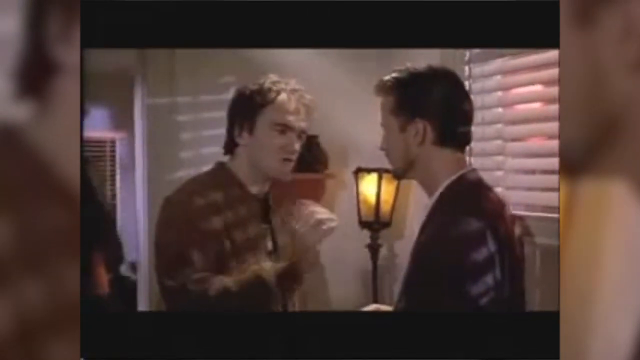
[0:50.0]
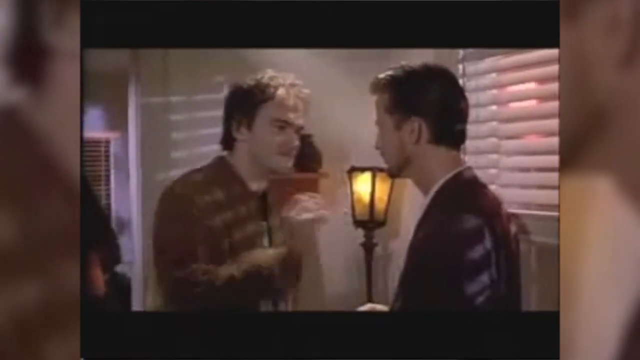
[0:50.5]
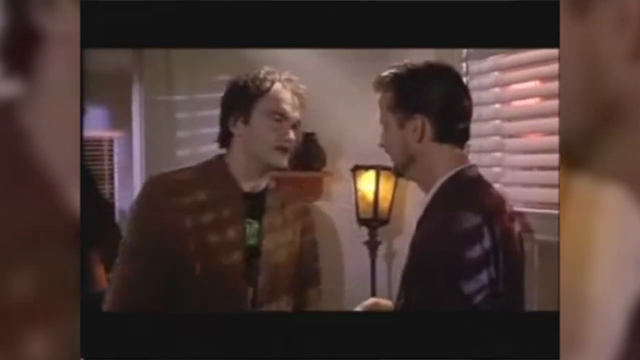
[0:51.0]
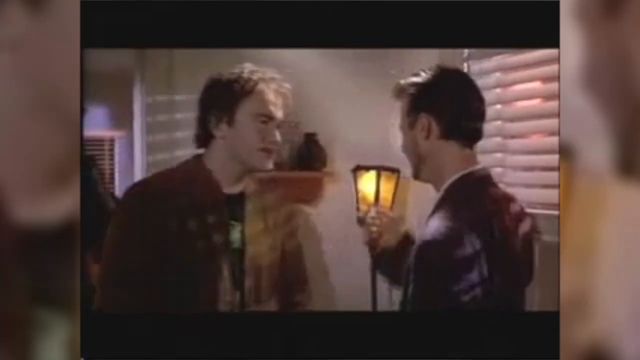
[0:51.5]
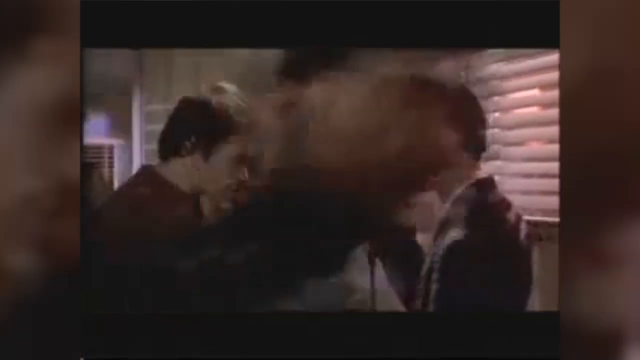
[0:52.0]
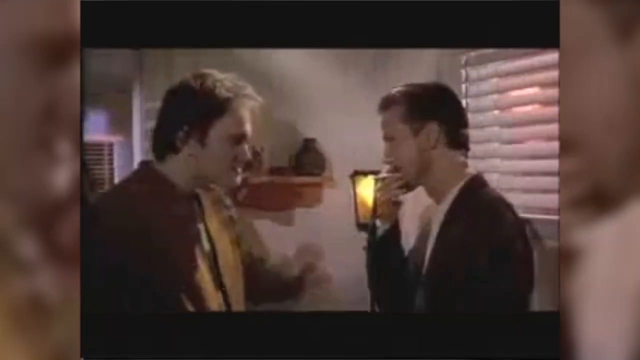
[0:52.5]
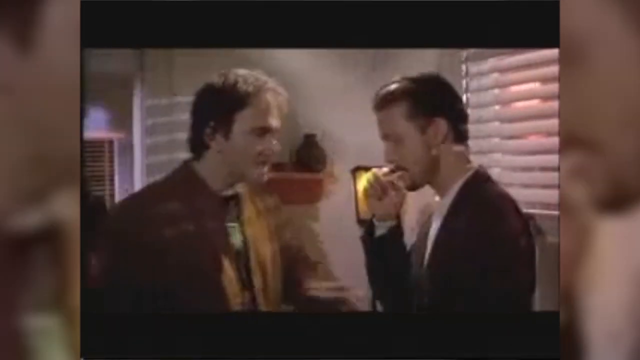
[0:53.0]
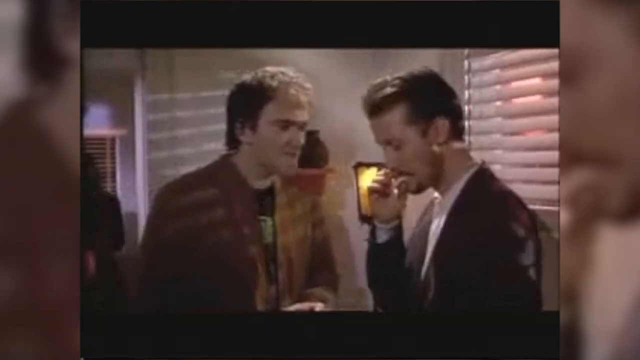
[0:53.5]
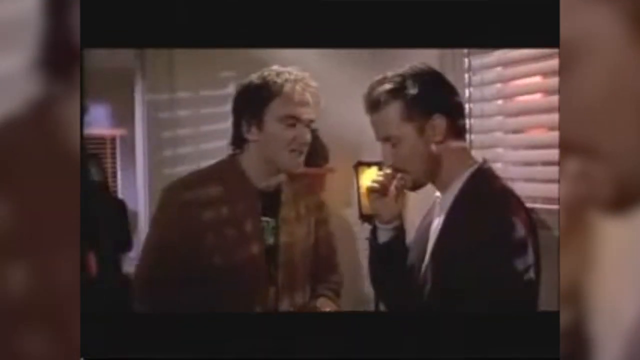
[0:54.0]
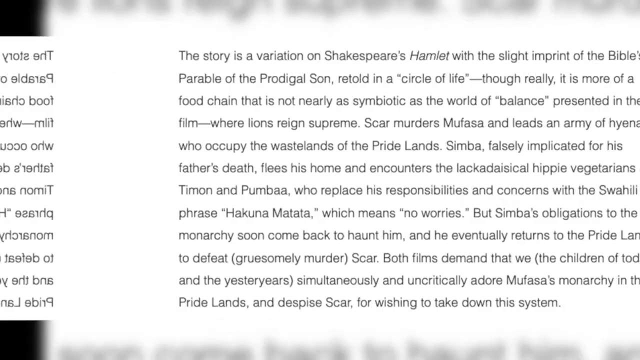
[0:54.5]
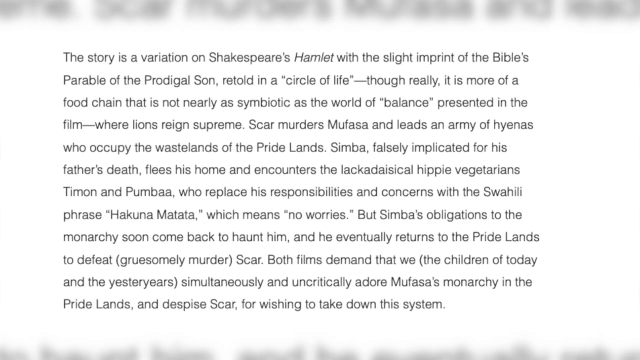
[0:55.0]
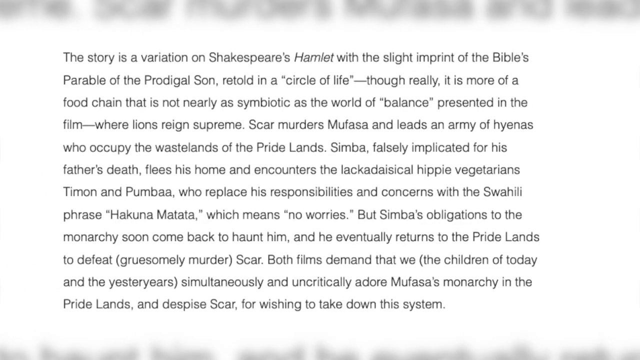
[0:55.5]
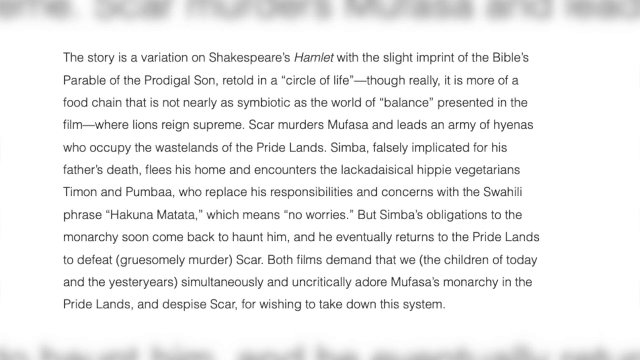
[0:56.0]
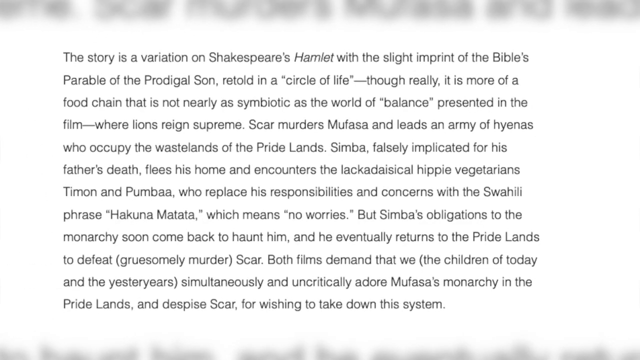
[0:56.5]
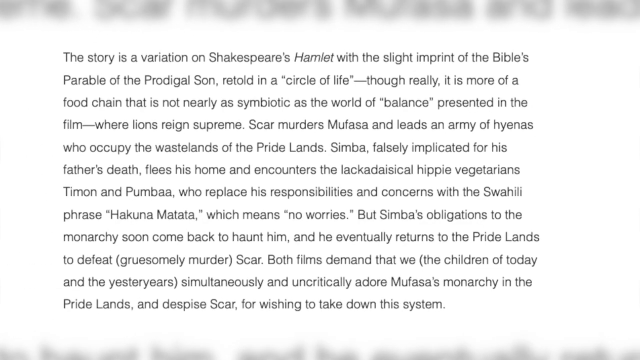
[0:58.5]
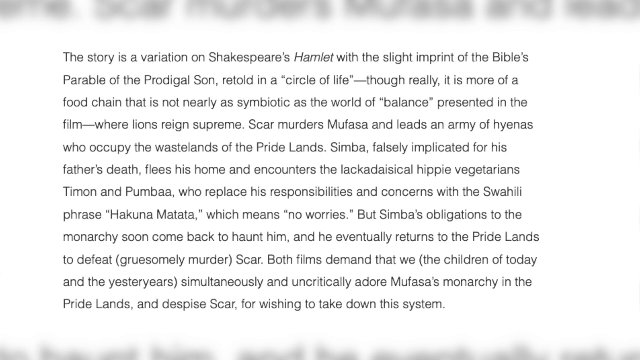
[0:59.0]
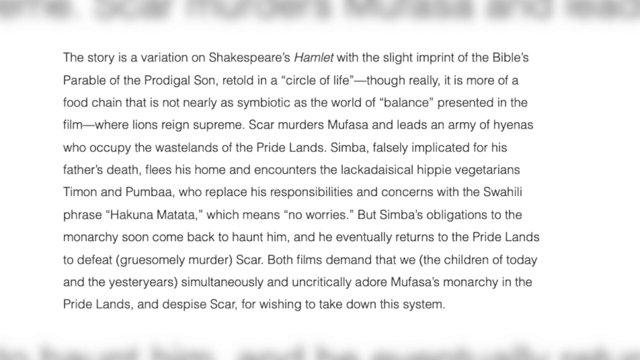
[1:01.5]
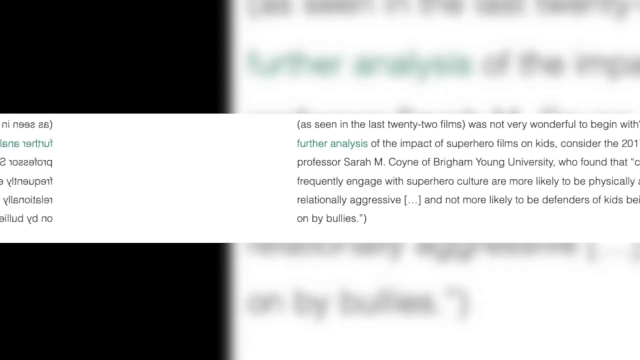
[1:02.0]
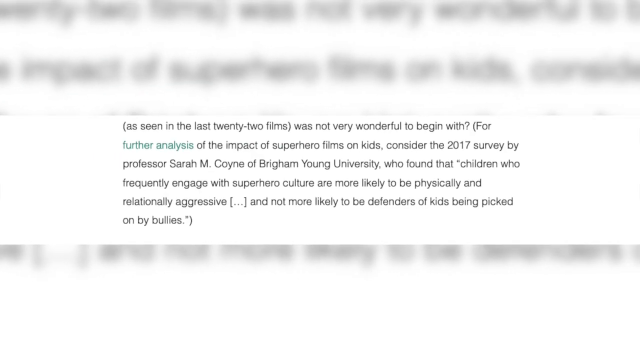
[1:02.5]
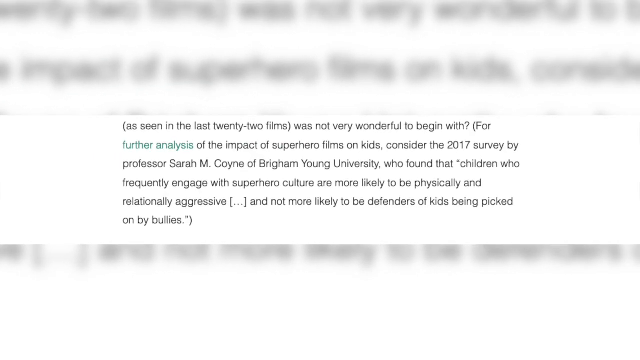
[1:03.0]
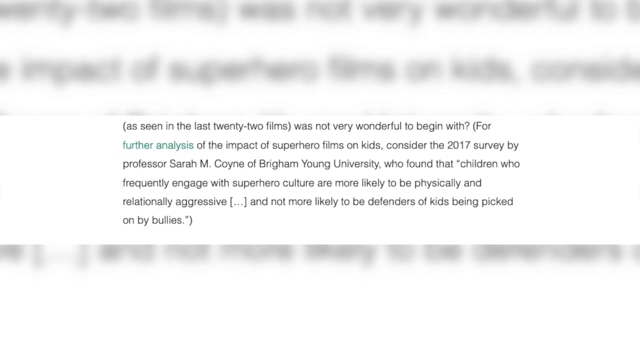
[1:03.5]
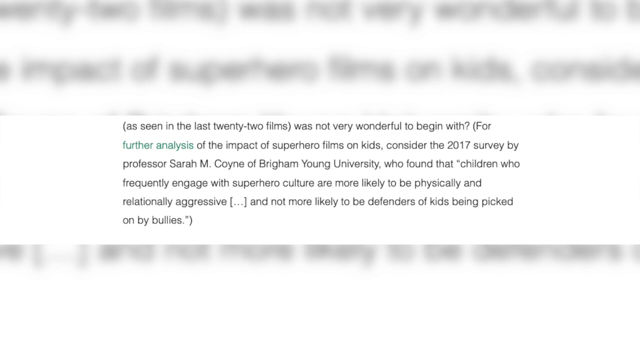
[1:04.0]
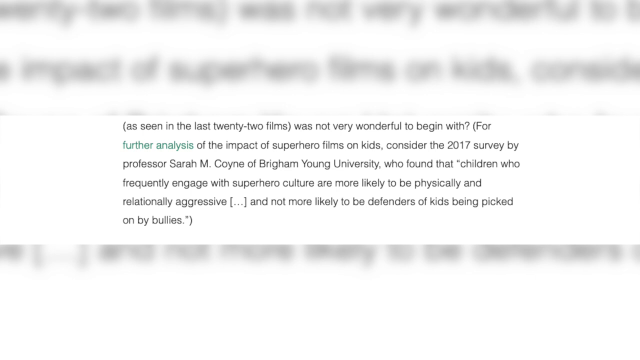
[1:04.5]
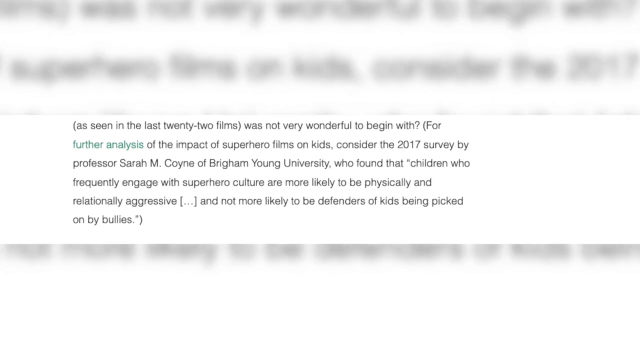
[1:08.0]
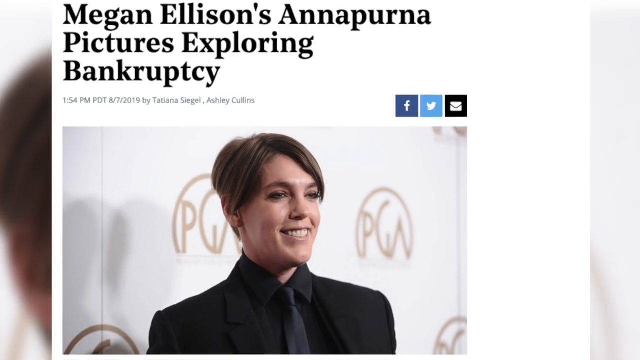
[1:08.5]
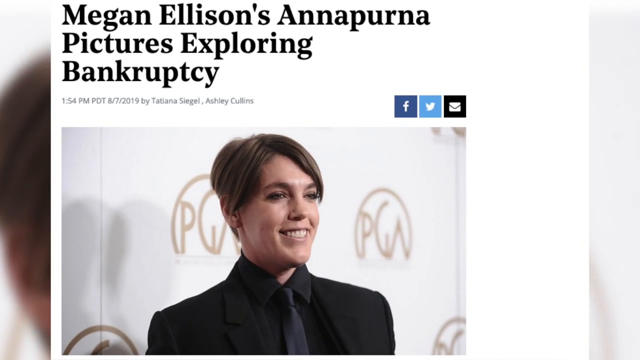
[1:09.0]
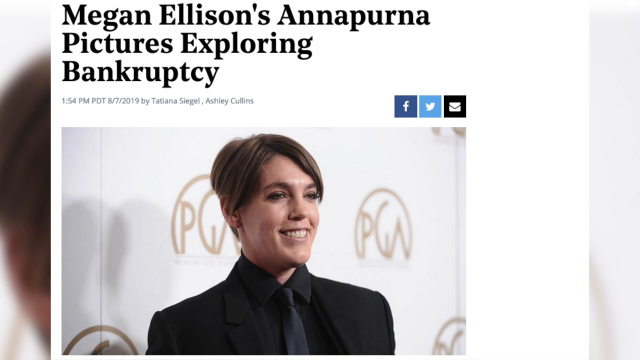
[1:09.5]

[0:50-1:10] Two men have a conversation in a room, with a lit lamp and a window blind in the background. Both wear jackets: one jacket is dark brown, while the other man wears a black jacket with a white t-shirt underneath. The man in the black jacket is smoking, and the man in the dark brown jacket seems agitated as he gesticulates while speaking to the other man. The man in the black jacket puts the cigarette in his mouth, takes a puff, and removes it. The video transitions to text on a white background stating "The story is a version of Shakespeare's Hamlet" and continuing with "Simba falsely implicated for his father's death, flees his home" and "But Simba's obligation to the monarchy soon comes back to haunt him, and he eventually returns to the Pride Lands." It also states that both films demand that we "simultaneously and uncritically adore Mufasa's monarchy in the Pride Lands and despise Scar for wishing to take down this system." Additional text is then added, with "Further analysis" written in green, followed by "of the impact of superhero films on kids" and "Consider the 2017 survey by Professor Sarah M. Coyney of Brigham Young University."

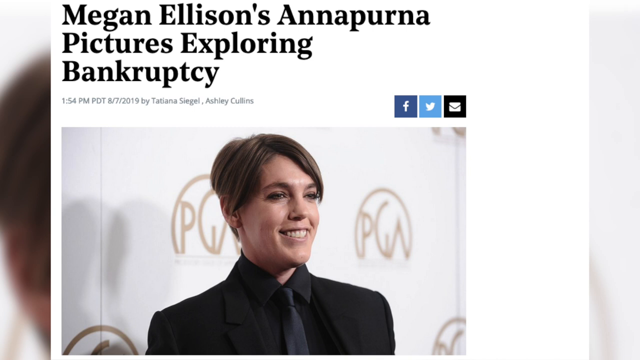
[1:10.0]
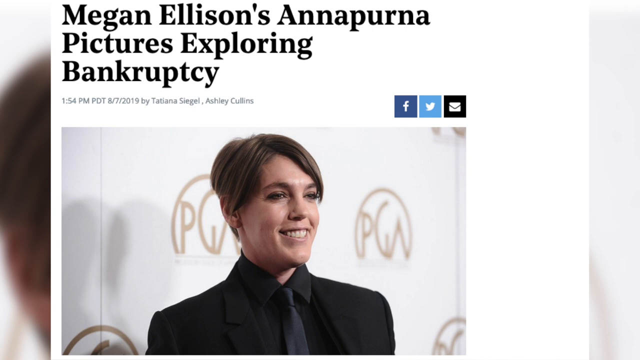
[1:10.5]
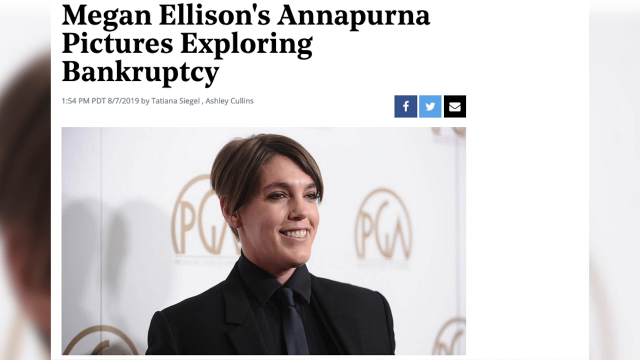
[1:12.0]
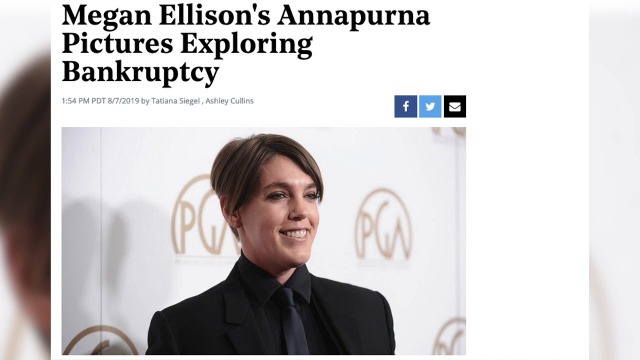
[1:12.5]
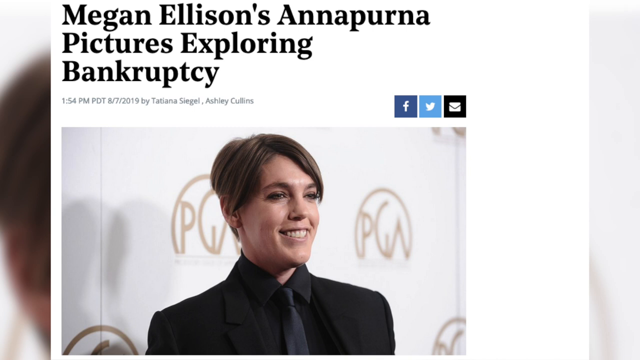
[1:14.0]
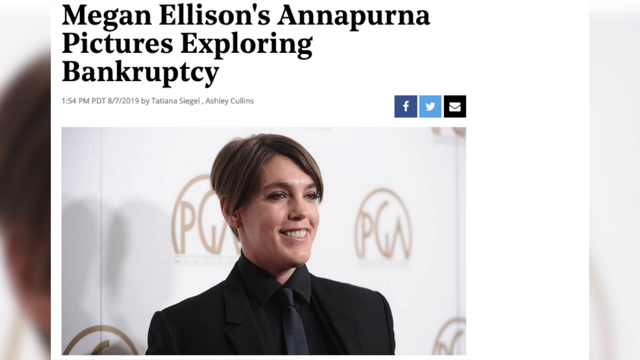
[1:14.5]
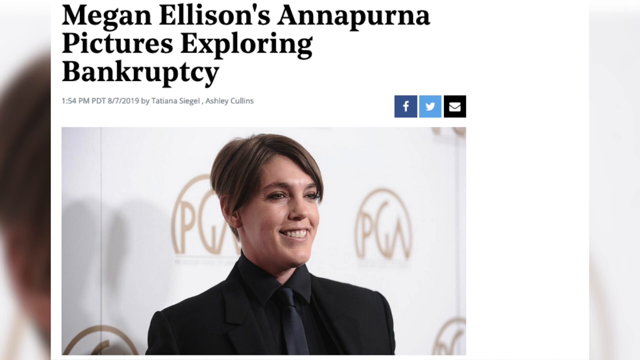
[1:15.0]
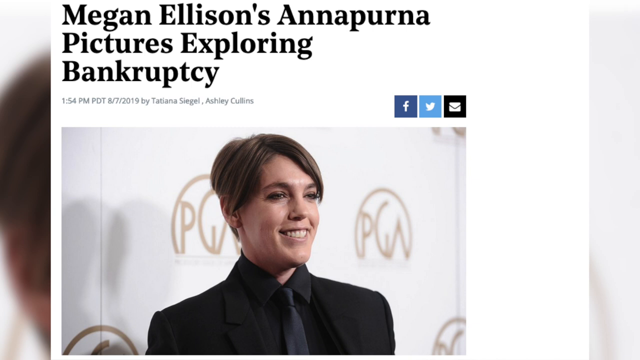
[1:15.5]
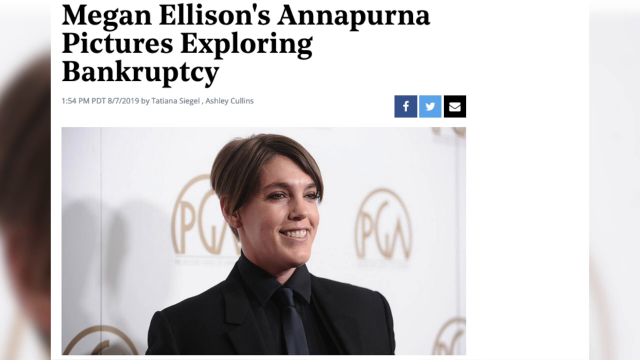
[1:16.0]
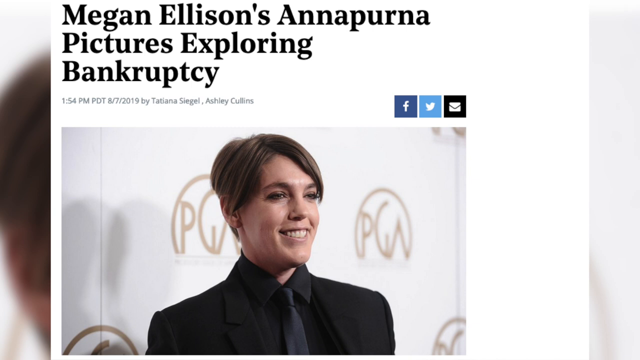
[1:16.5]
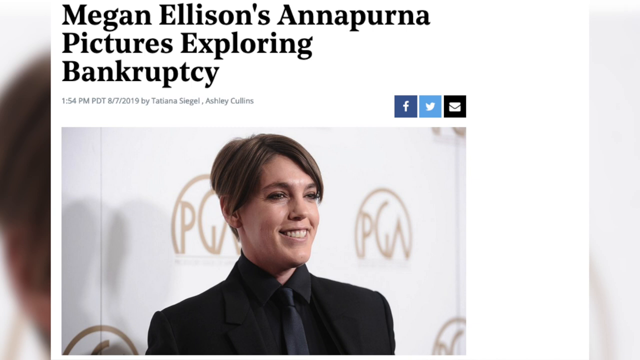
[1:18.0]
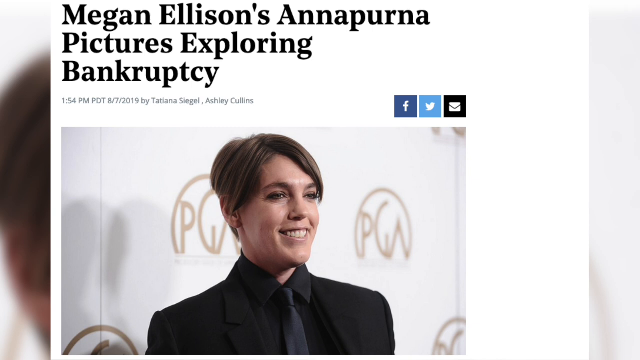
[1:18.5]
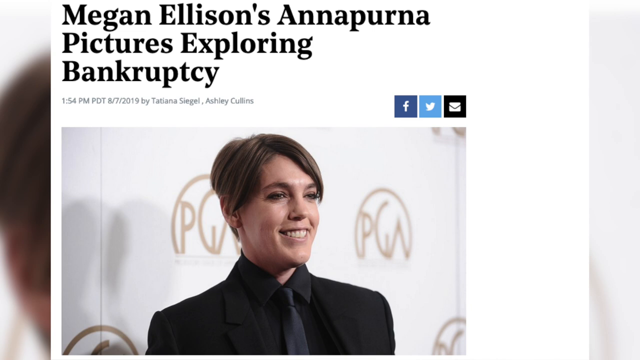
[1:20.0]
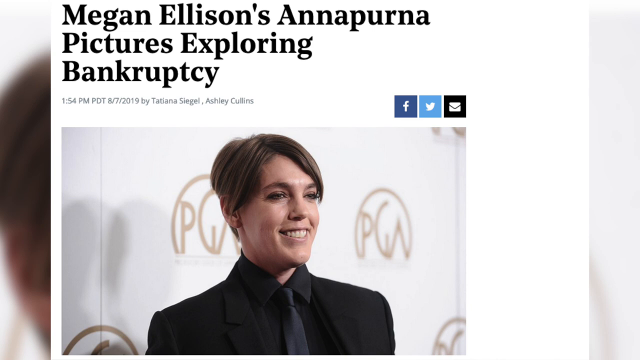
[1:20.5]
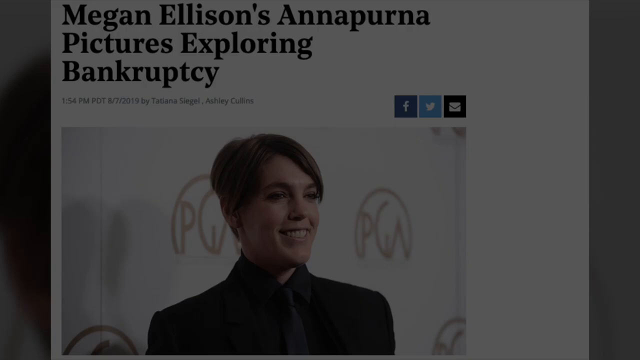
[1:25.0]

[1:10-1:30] An article appears with a headline in black that reads "Megan Ellison's Annapurna Pictures Exploring Bankruptcy." Below it is the time, "1.54pm PDT," the date, "8-7-2019," and the byline "by Tatiana Sigel and Ashley Cullins," all written in black. To the right are a Facebook logo with a white F on a blue background, a Twitter logo and an email logo. Below is an image of an individual standing at an event, with an icon behind the individual. The individual has dark cropped hair, is smiling, and wears a black suit with a black shirt and a black tie. The video fades to black.